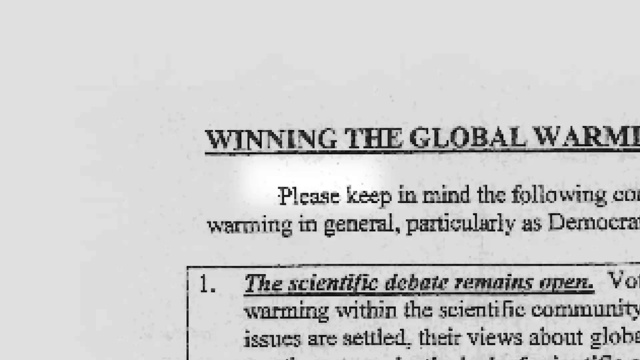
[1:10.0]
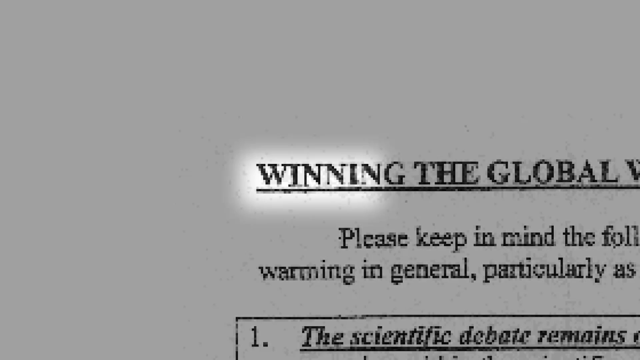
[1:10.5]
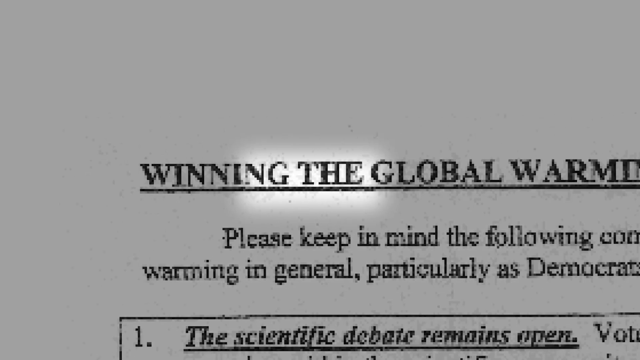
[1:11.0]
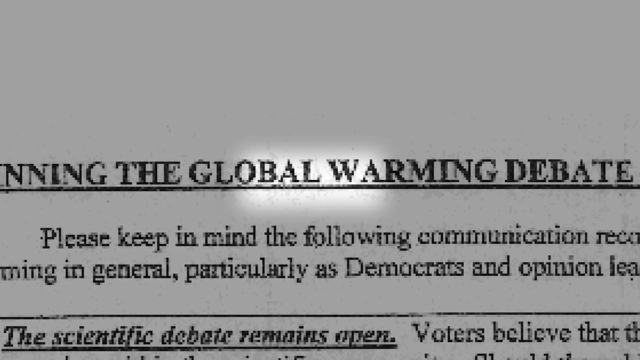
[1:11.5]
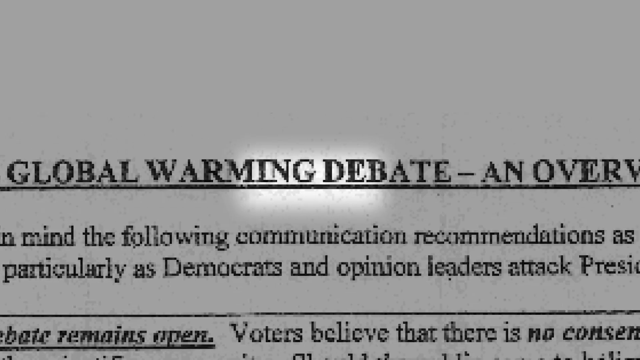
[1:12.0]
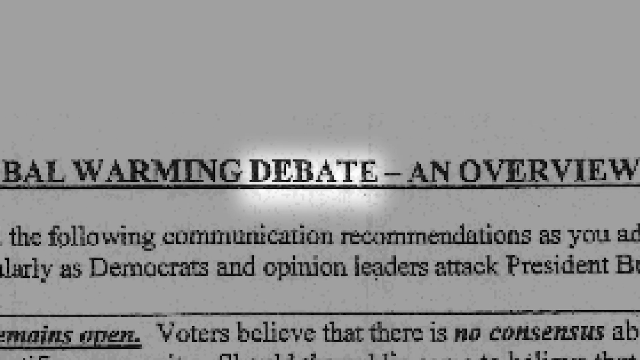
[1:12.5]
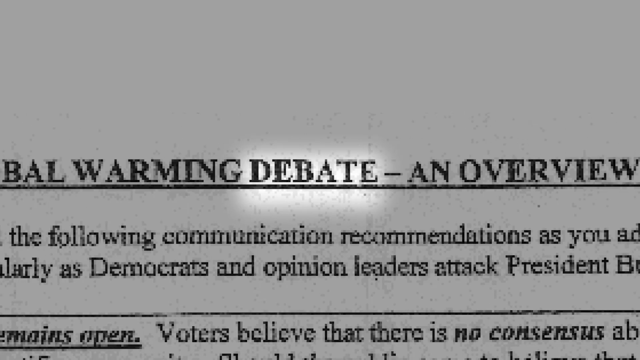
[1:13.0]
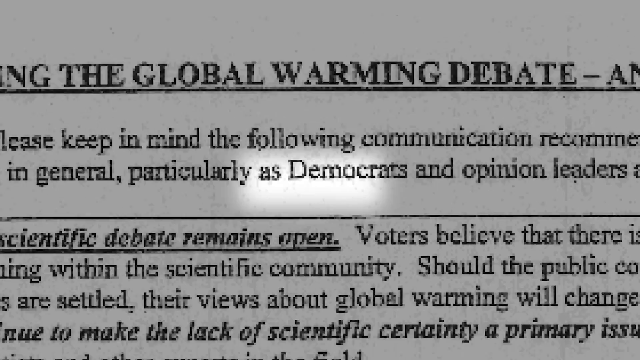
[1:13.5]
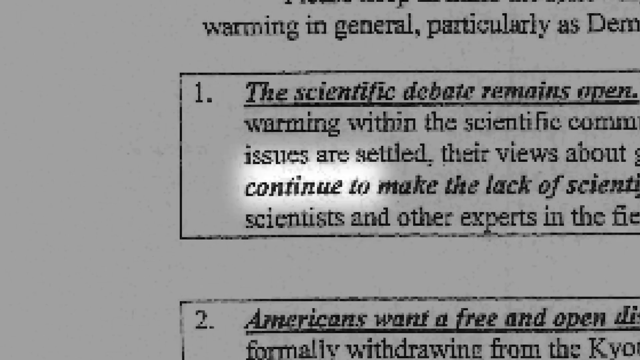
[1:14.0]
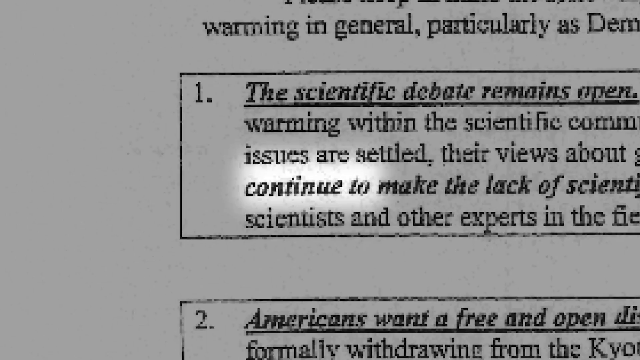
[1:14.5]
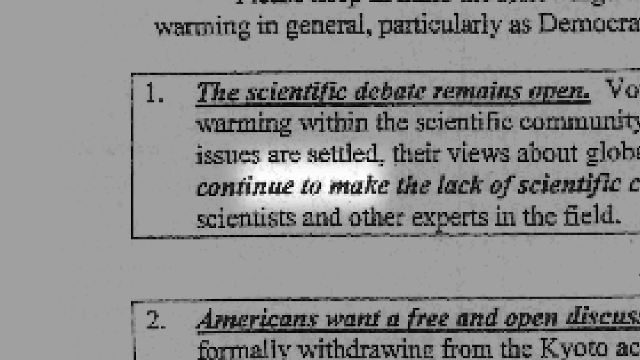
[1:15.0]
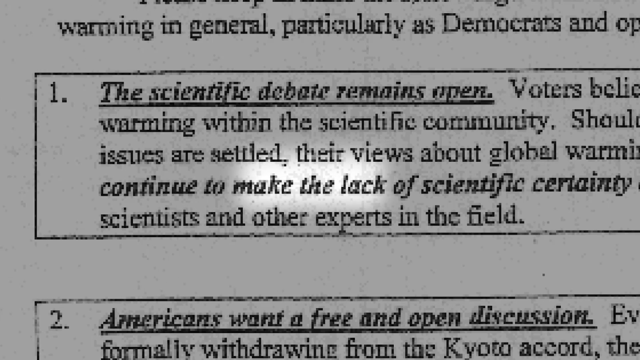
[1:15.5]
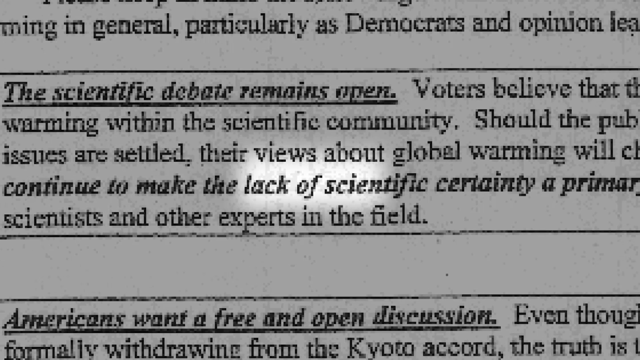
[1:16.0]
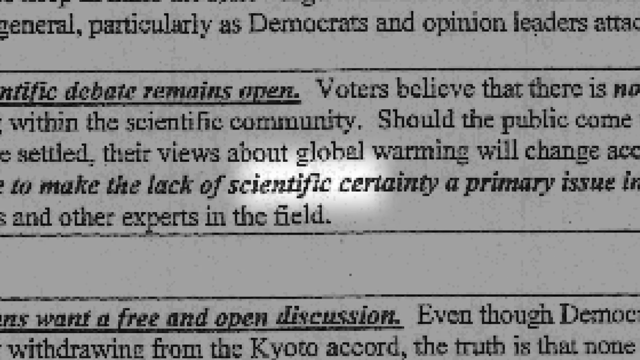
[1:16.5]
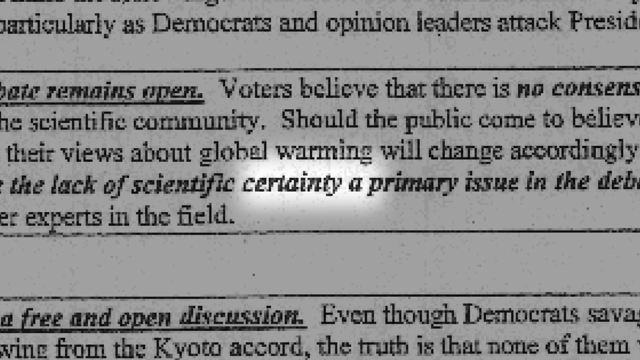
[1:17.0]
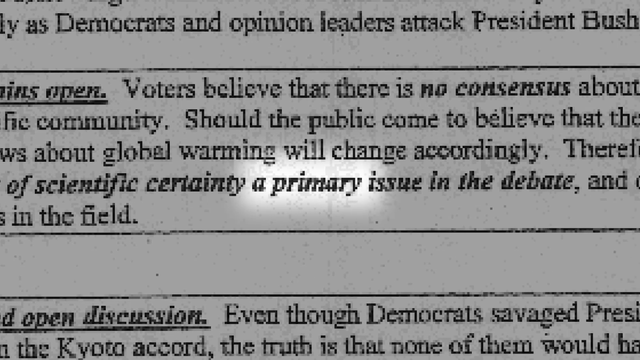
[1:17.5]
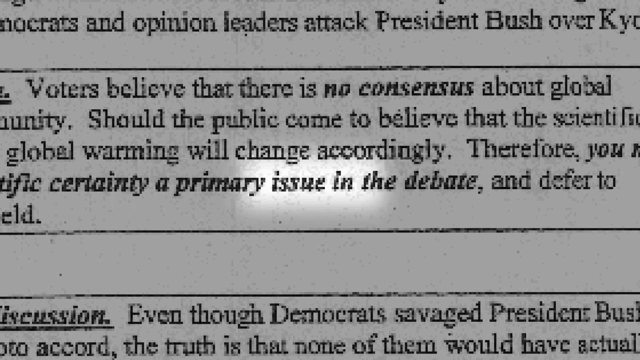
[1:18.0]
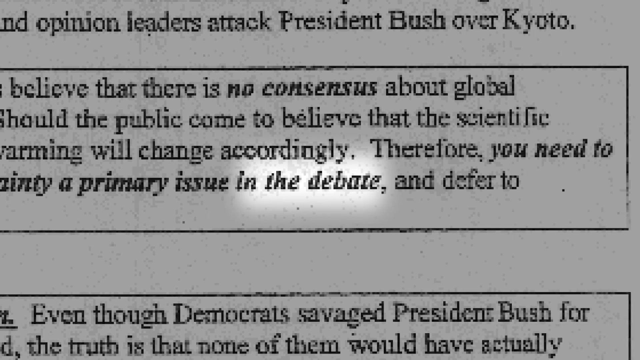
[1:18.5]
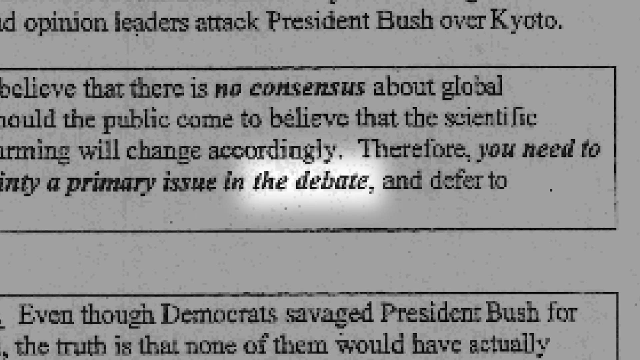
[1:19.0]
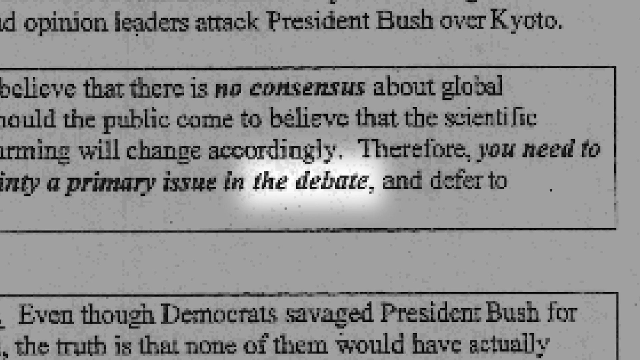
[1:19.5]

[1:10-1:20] Part of a piece of paper is shown, headed "winning the global warming debate, an overview", with that top title highlighted. Readable lines include "please keep in mind the following communication recommendations as you", "warming in general, particularly as Democrats and opinion leaders attack President Bush over", "number one, the scientific debate remains open" and "number two, Americans want a free and open discussion". Half of the paper cannot be seen.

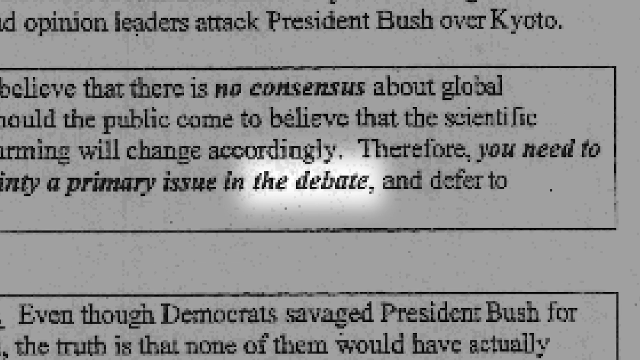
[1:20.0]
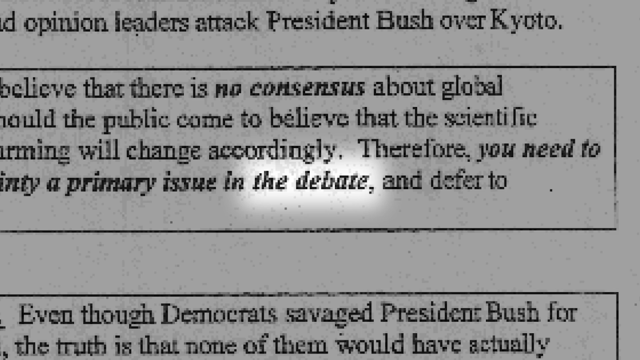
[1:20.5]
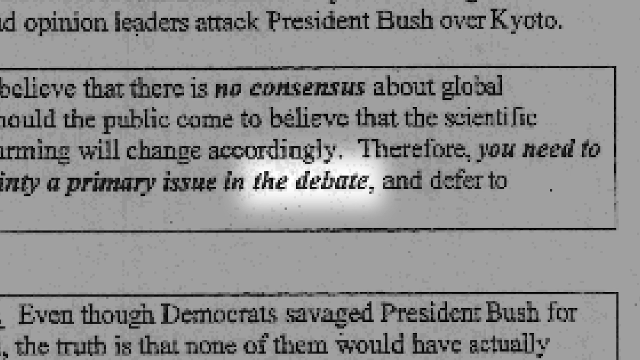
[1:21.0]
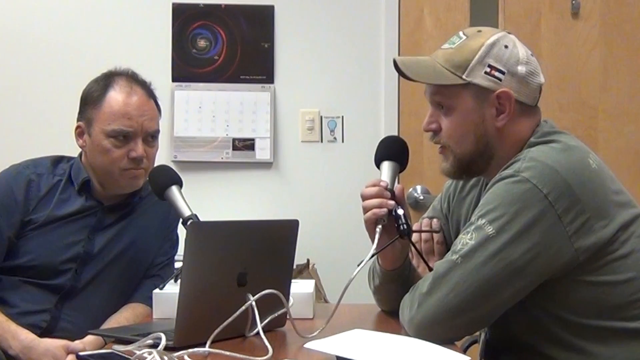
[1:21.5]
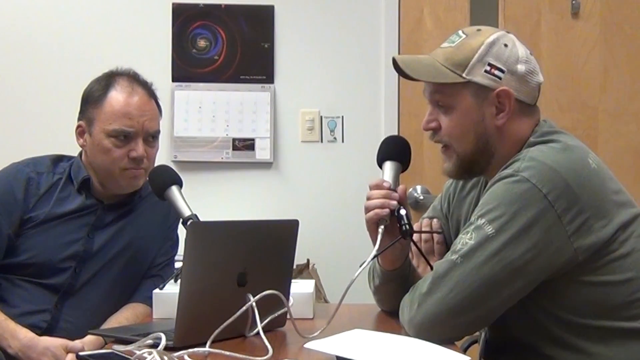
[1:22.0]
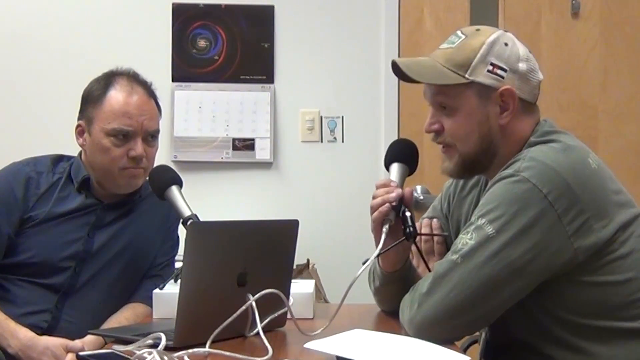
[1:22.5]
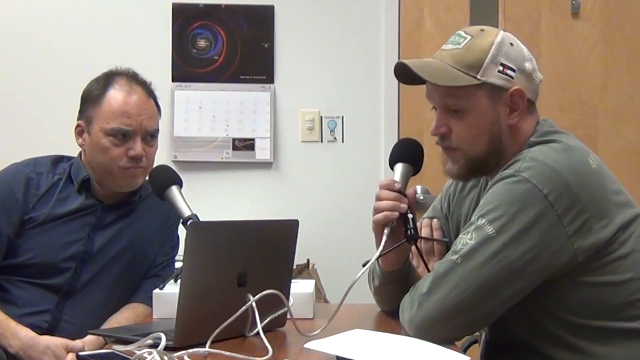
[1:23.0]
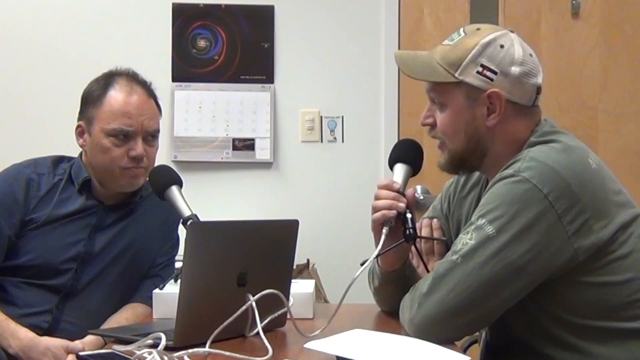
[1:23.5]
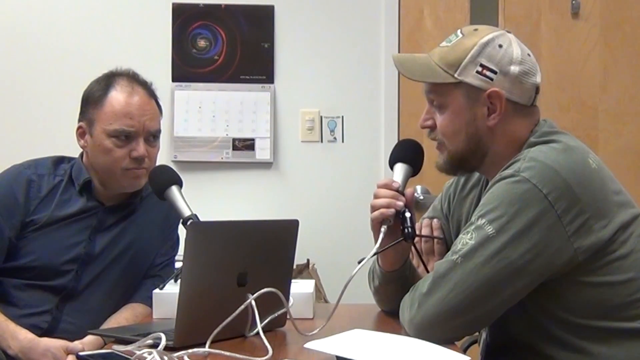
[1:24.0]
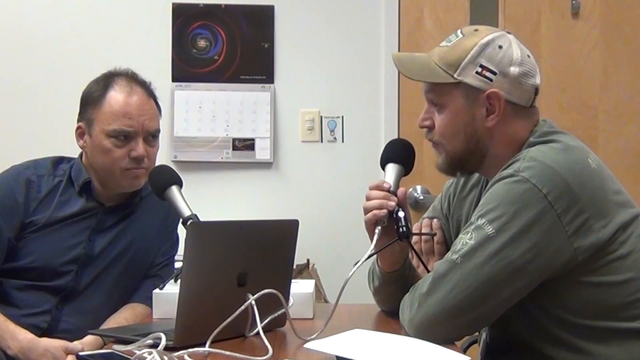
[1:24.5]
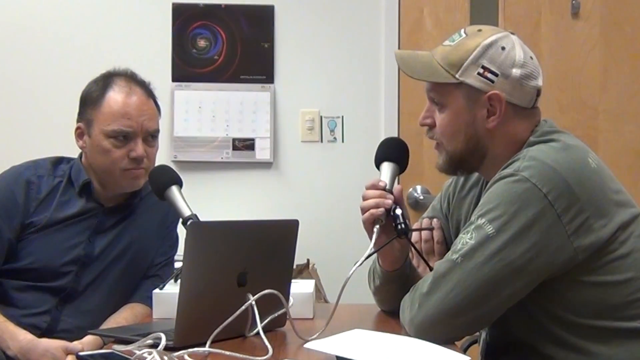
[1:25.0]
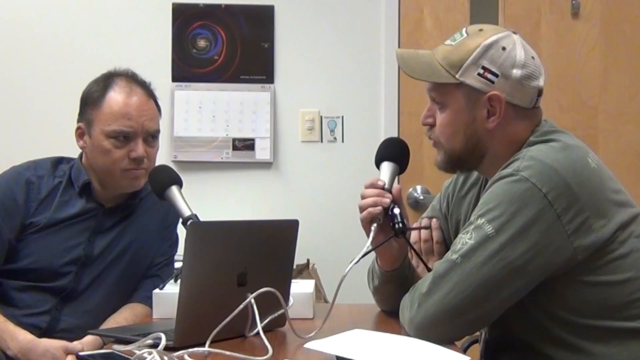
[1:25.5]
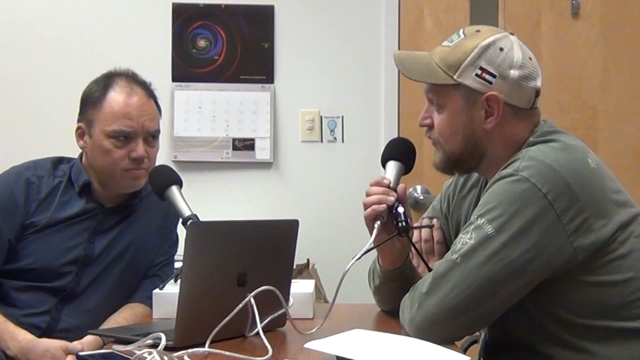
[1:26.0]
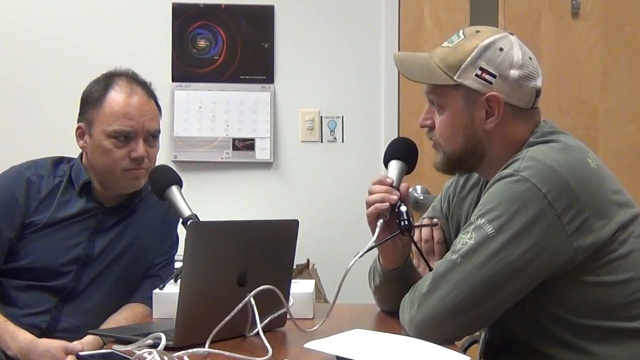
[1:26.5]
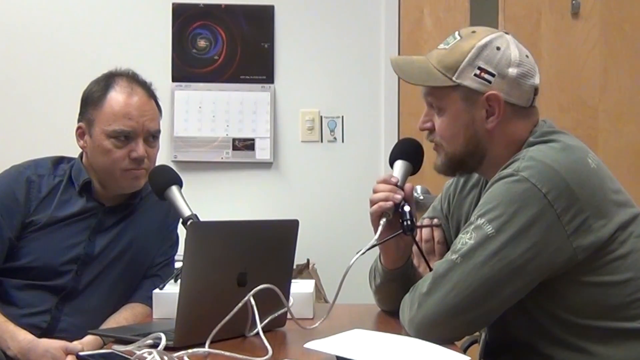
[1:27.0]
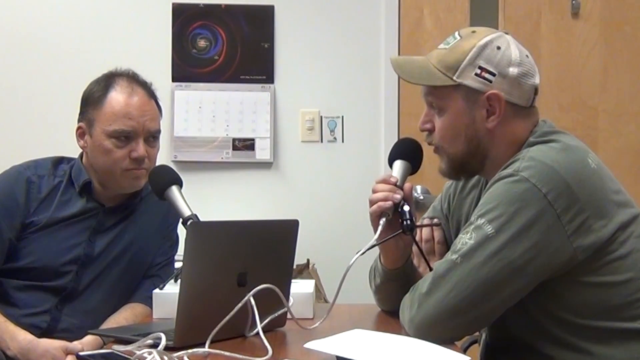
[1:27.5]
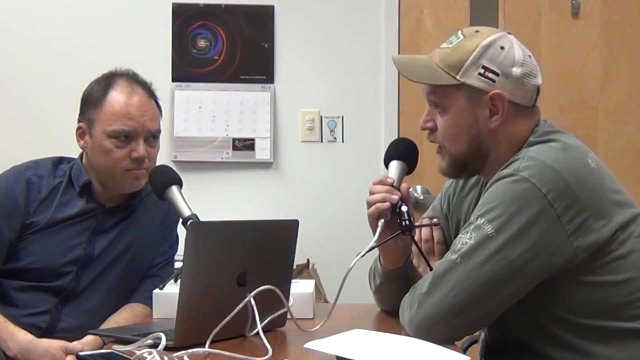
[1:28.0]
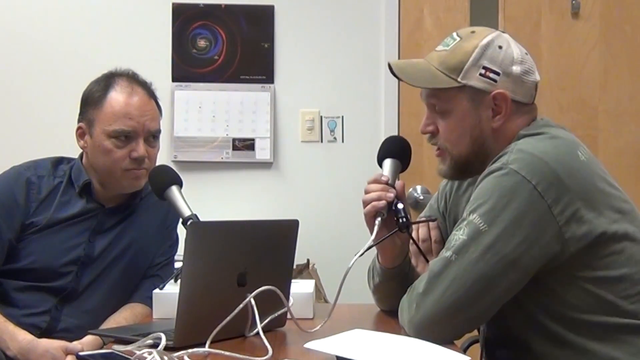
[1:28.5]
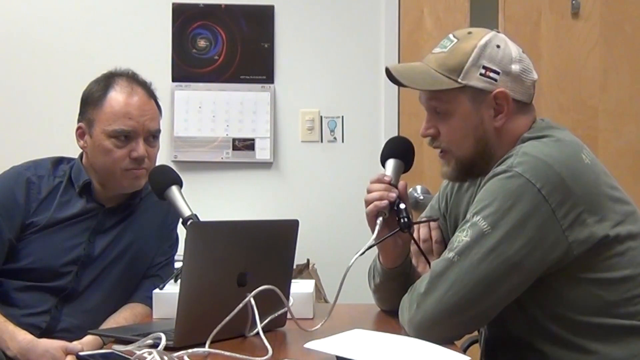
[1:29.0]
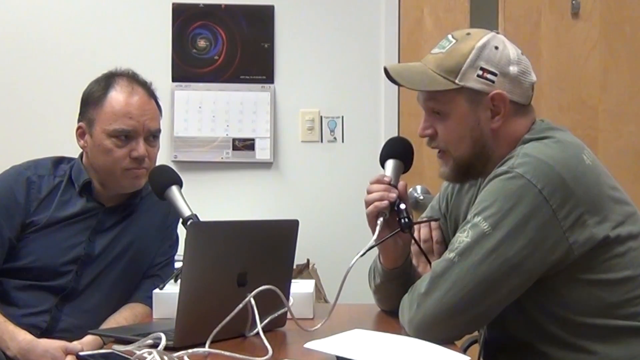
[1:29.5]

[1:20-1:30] Legal papers from the era of President Bush about the denial of scientific evidence are shown. Then two men talk in a smaller office space; the one on the left wears a blue shirt and the one on the right a green shirt, and both have microphones in front of them.